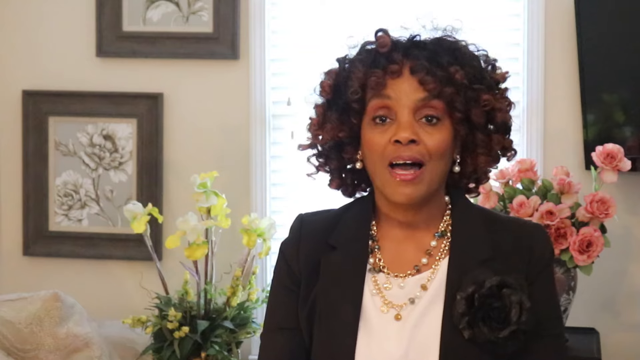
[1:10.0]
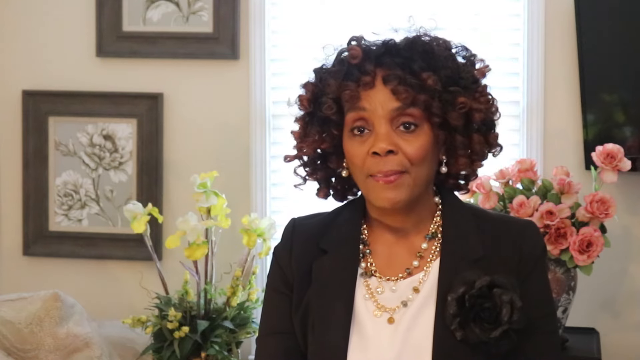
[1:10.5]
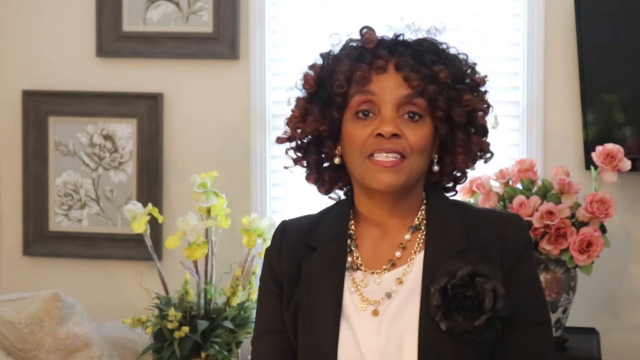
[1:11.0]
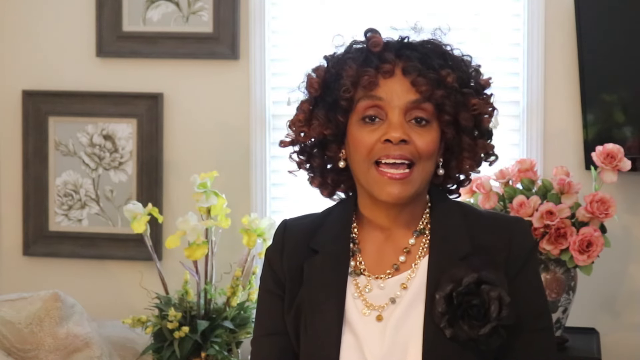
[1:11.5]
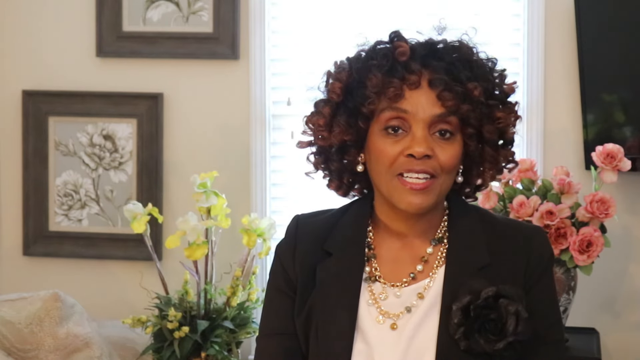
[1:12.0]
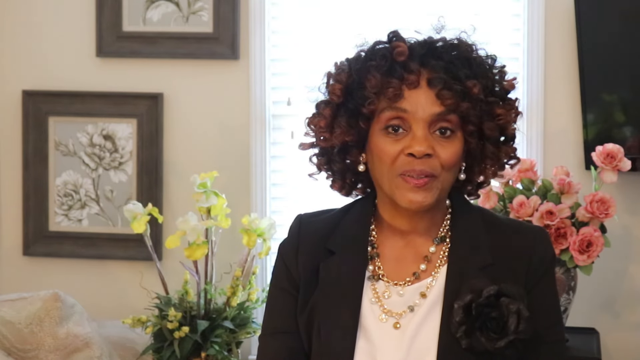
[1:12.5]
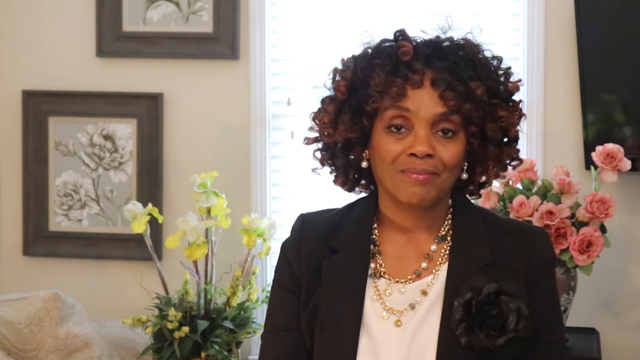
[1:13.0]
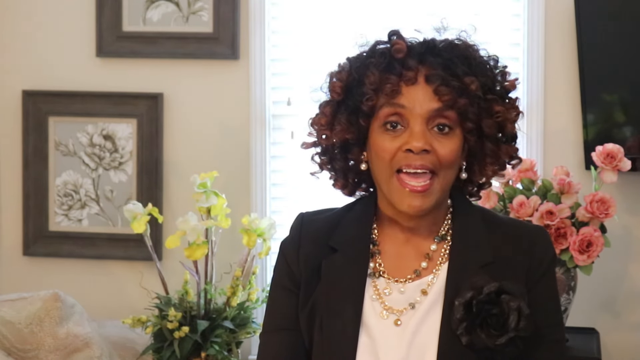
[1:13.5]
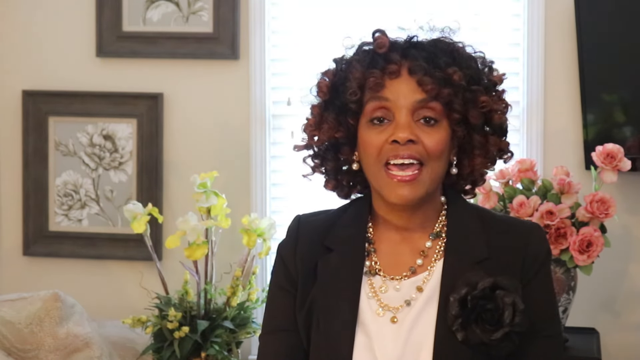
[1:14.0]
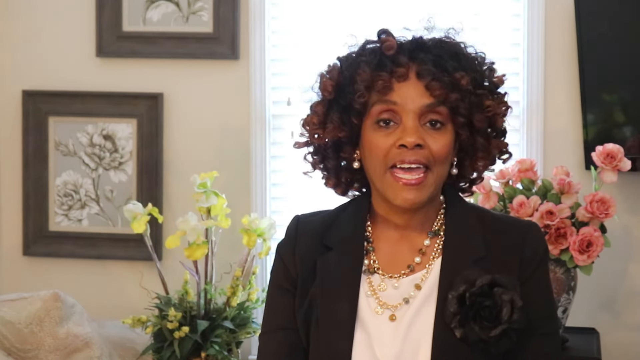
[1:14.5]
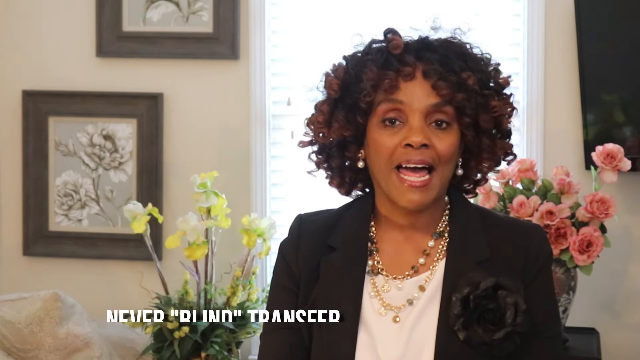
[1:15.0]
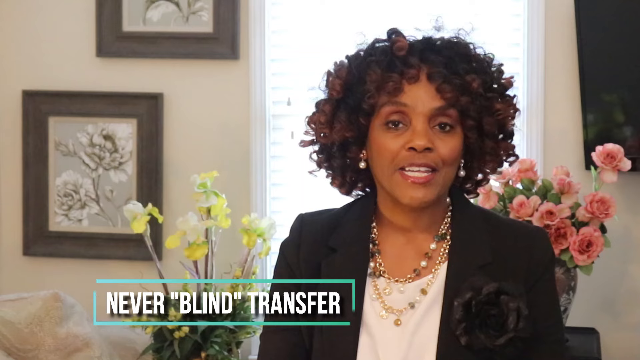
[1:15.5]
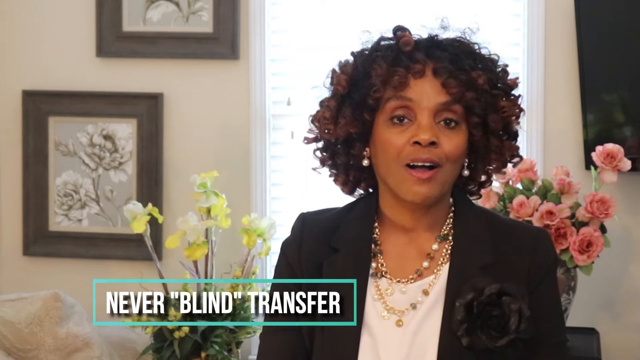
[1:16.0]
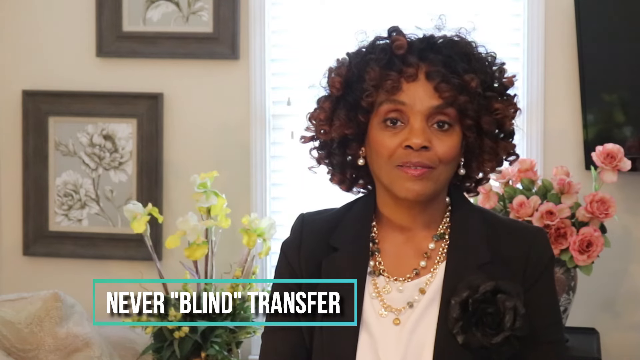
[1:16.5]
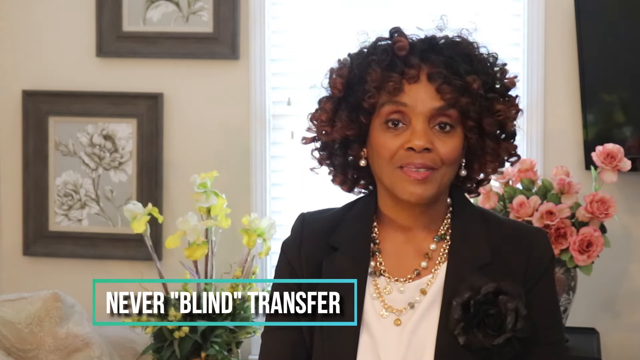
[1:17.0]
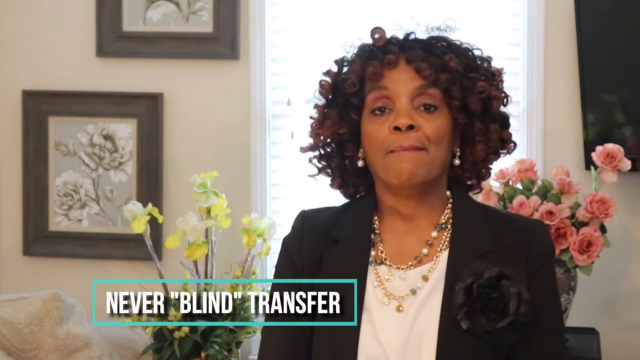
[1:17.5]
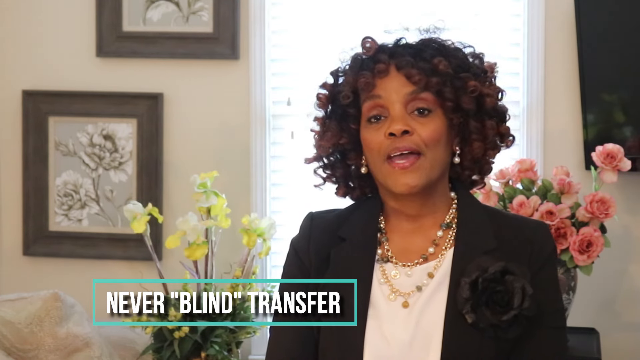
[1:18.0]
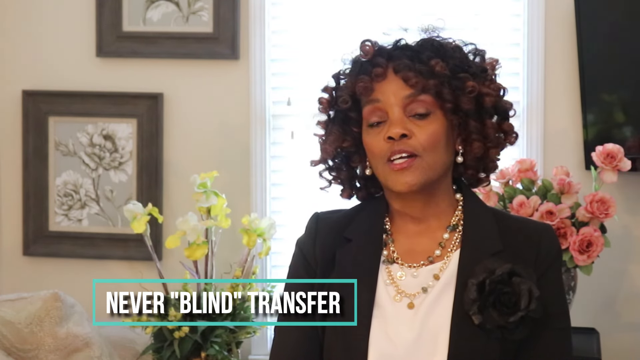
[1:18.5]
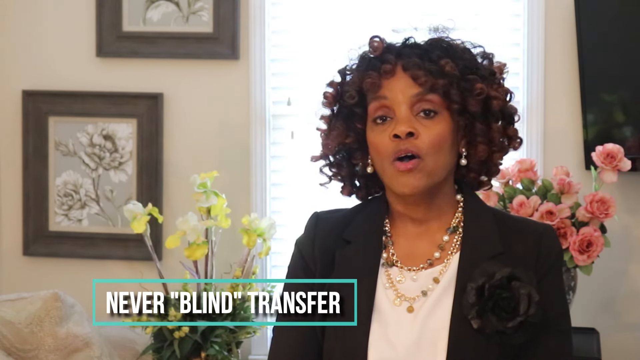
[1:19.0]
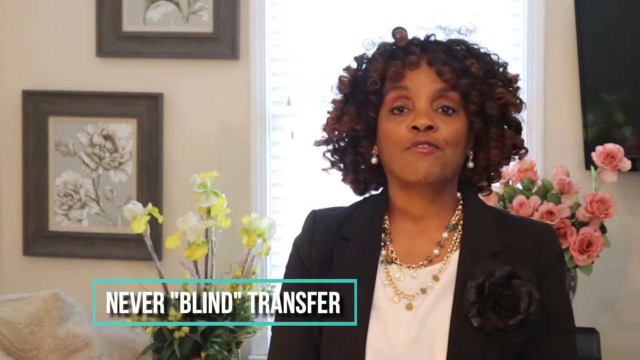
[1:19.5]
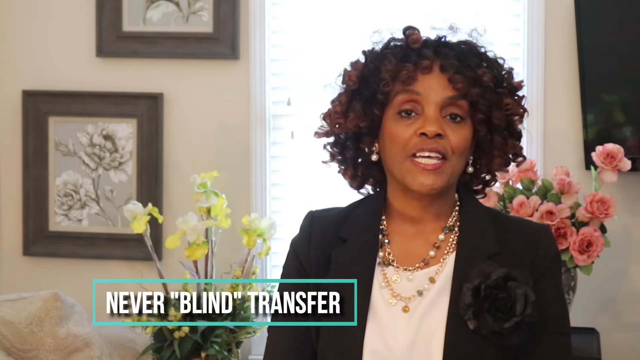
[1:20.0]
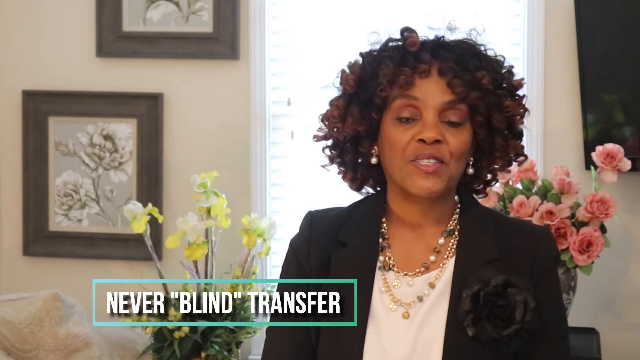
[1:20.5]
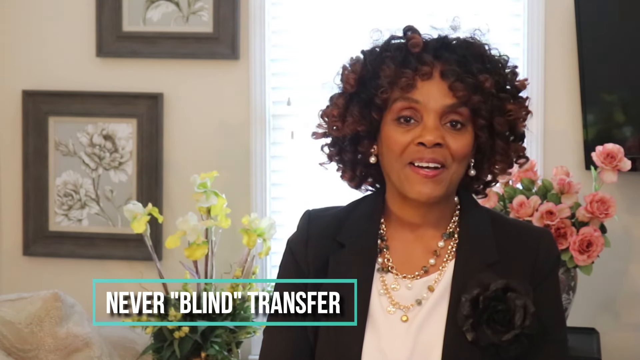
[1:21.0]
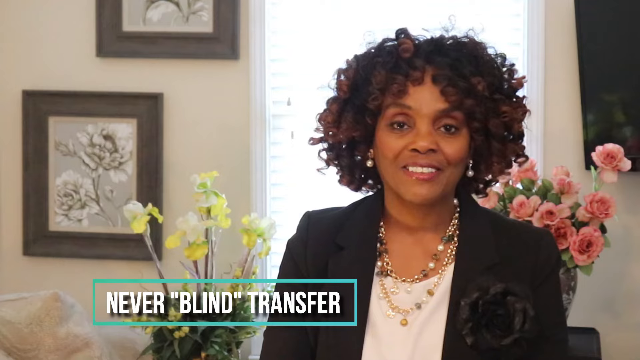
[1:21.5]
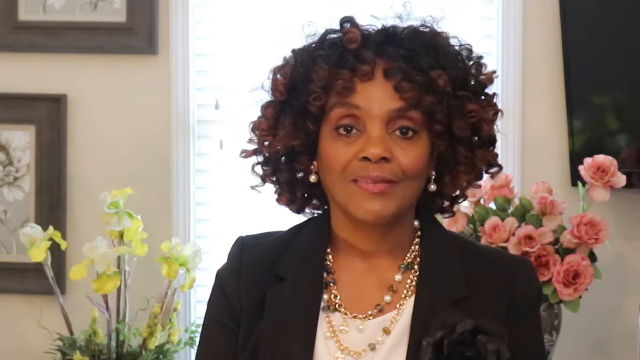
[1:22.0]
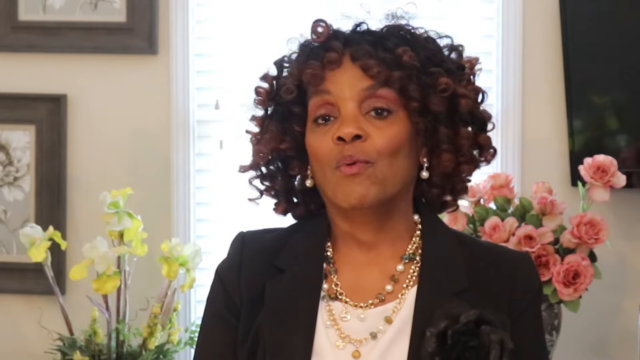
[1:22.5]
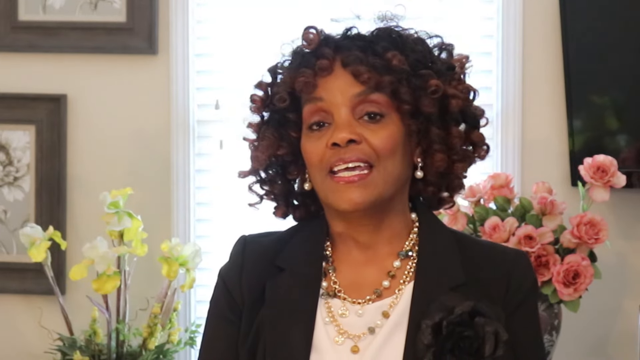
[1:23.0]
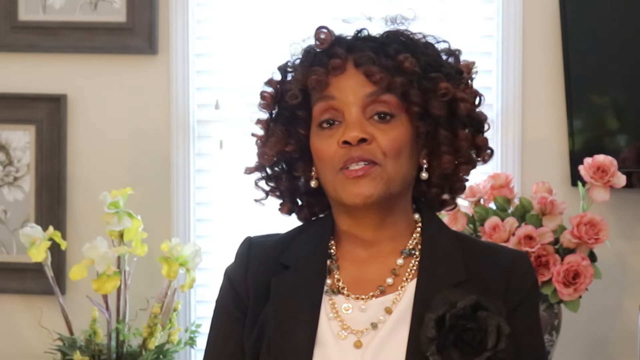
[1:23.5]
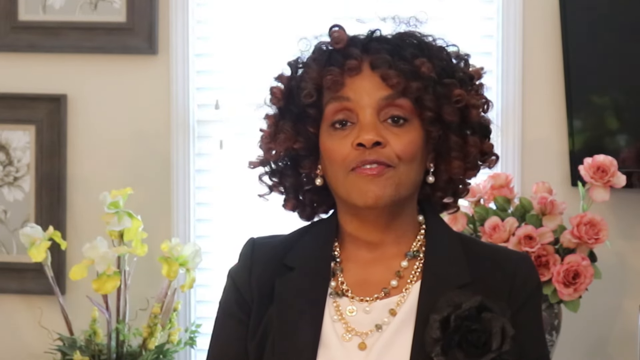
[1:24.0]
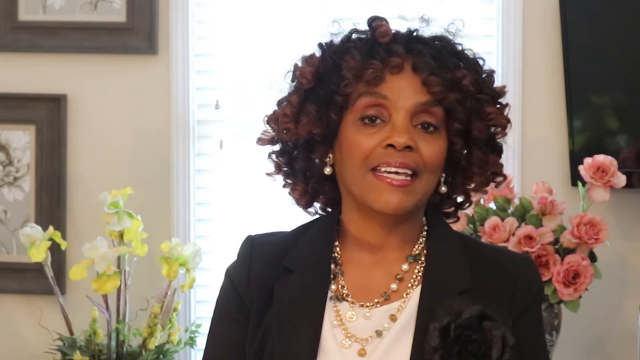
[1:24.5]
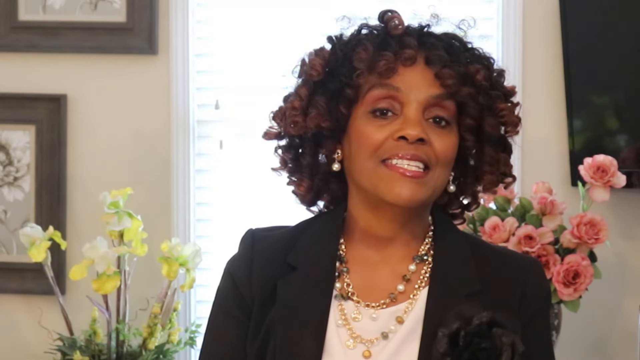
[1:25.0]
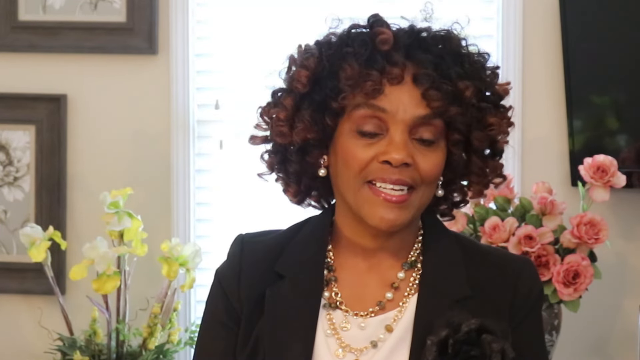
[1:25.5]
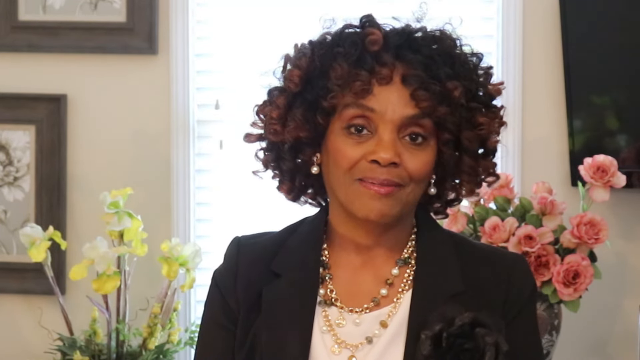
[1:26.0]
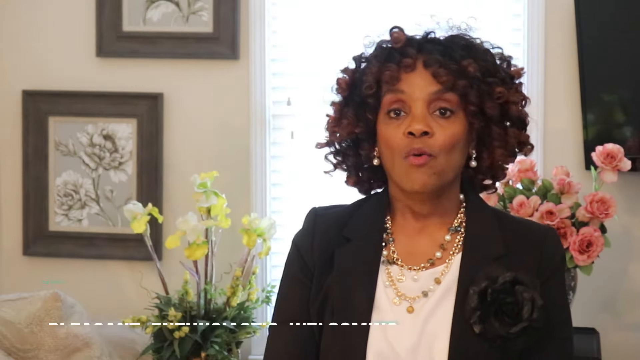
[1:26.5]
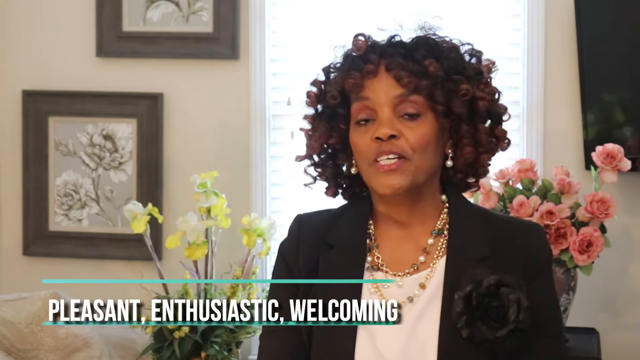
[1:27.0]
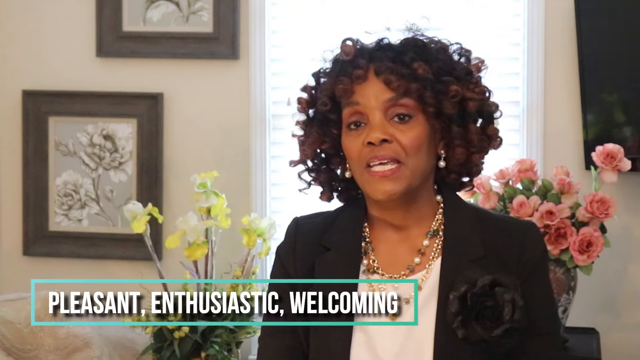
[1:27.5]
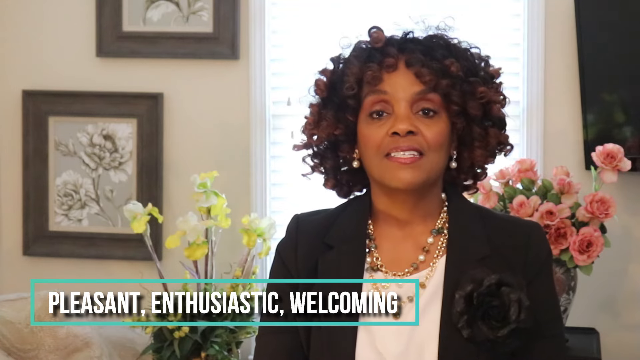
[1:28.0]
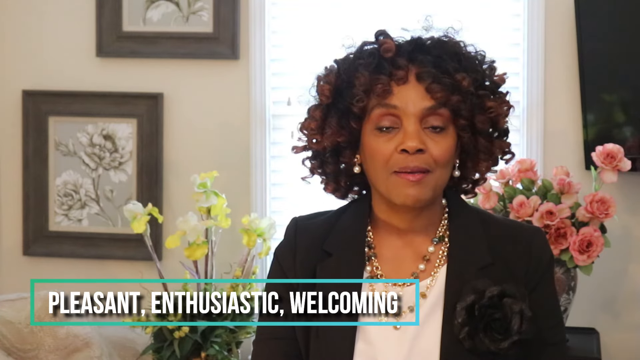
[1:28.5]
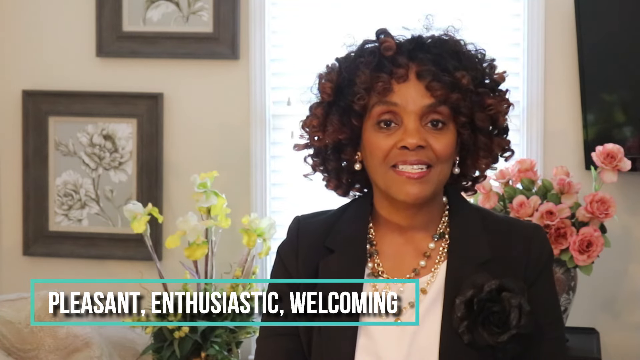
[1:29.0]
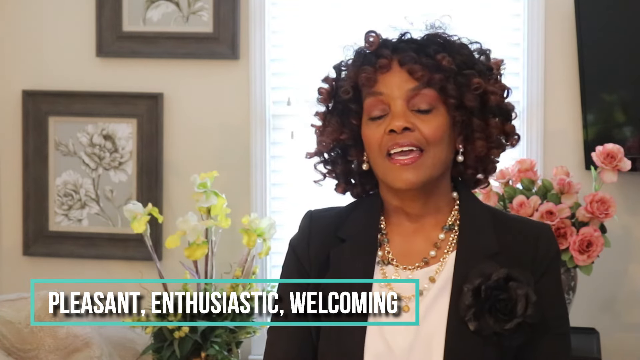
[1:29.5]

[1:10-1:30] The woman continues to talk, smiling. Words at the bottom of the screen say to never do a blind transfer, and the word "welcoming" is associated with her point. Points include that the caller feels valued, taken care of and listened to, respected, well-served and not hurried, does not feel like a bother or an interruption, and feels confident of being directed to the correct department expediently.